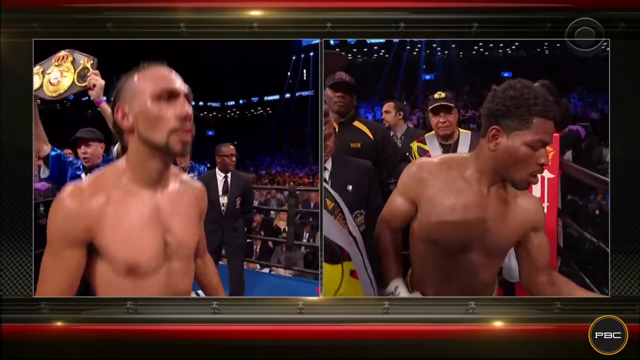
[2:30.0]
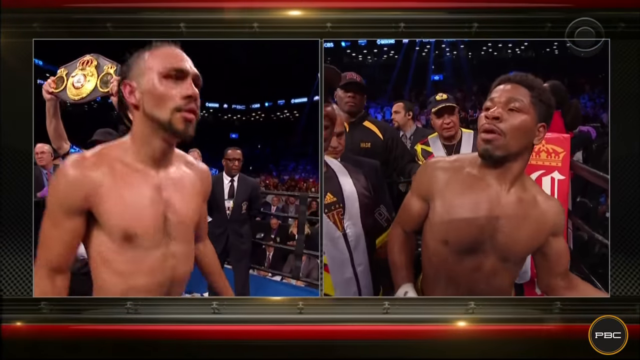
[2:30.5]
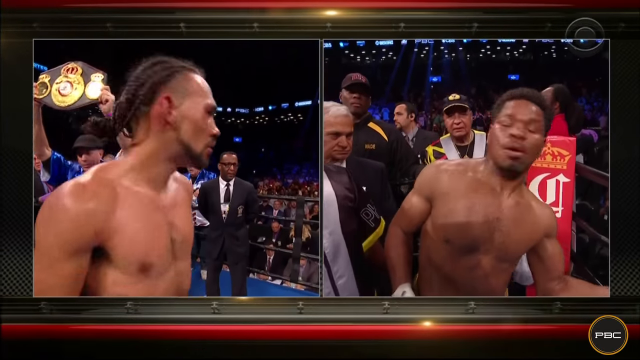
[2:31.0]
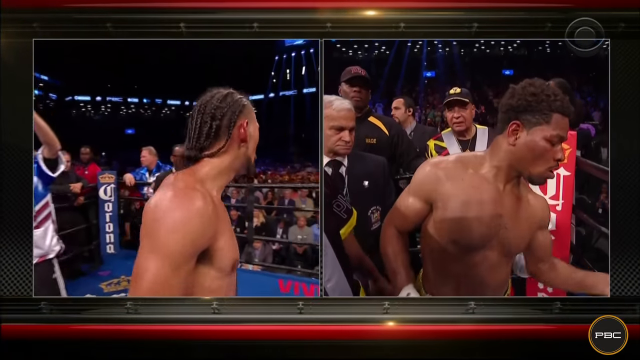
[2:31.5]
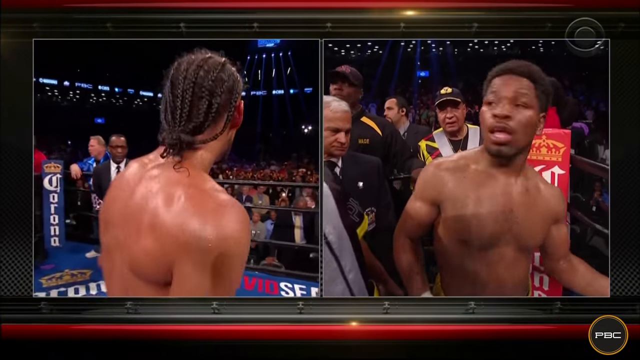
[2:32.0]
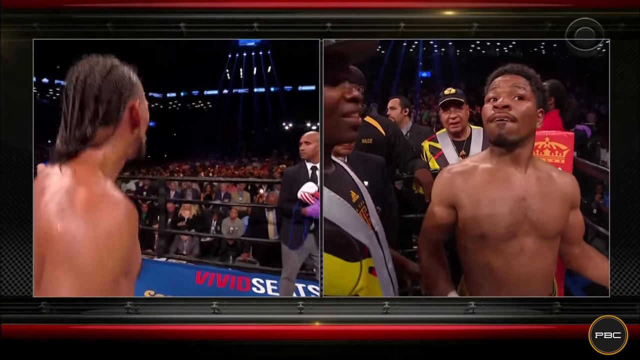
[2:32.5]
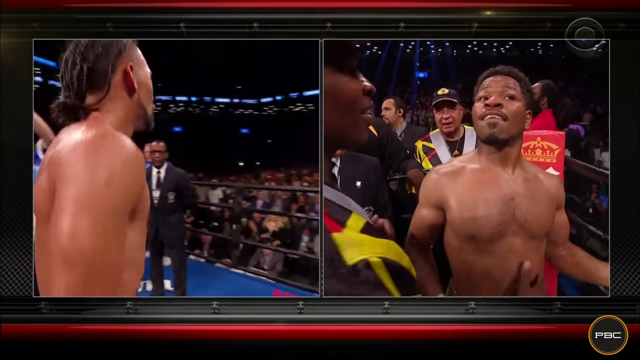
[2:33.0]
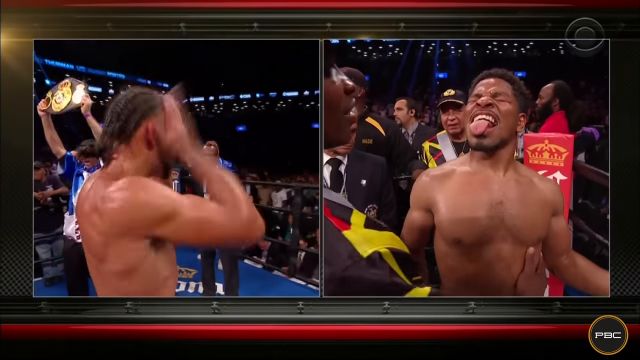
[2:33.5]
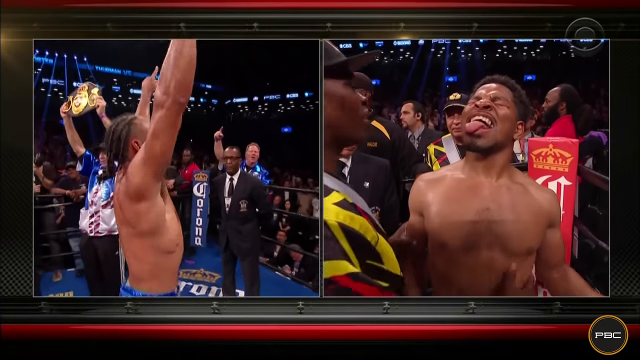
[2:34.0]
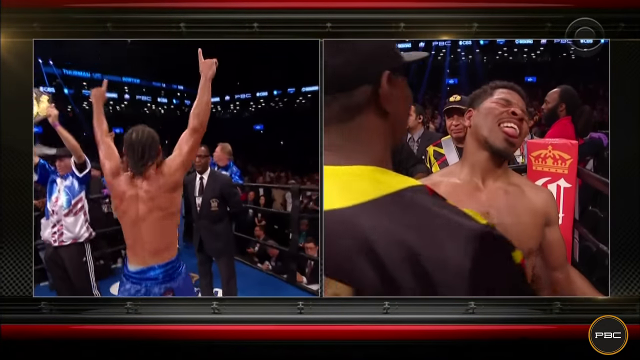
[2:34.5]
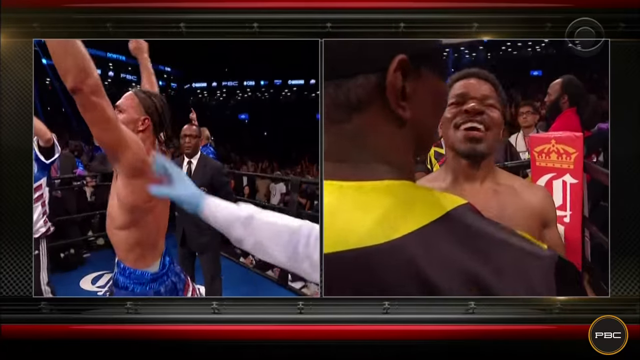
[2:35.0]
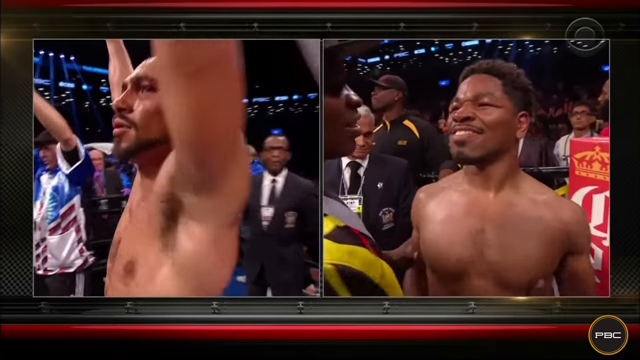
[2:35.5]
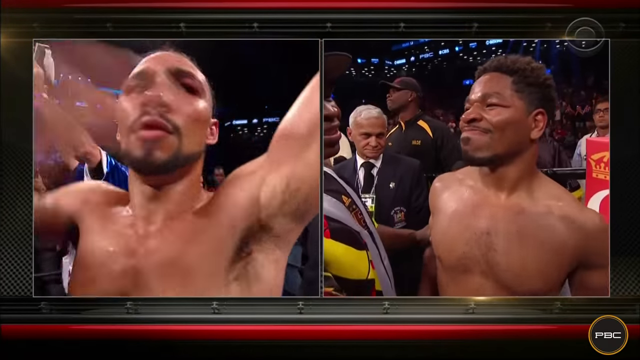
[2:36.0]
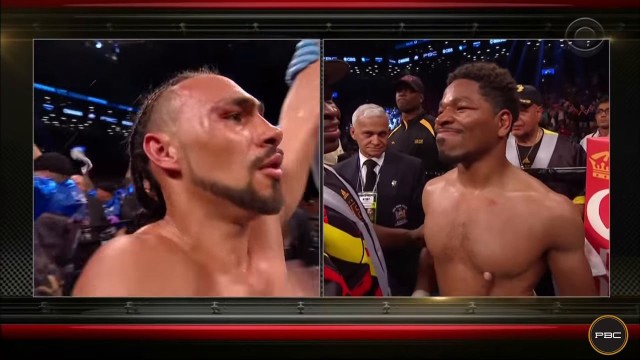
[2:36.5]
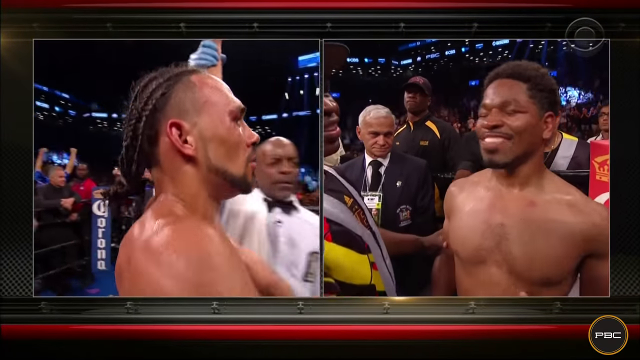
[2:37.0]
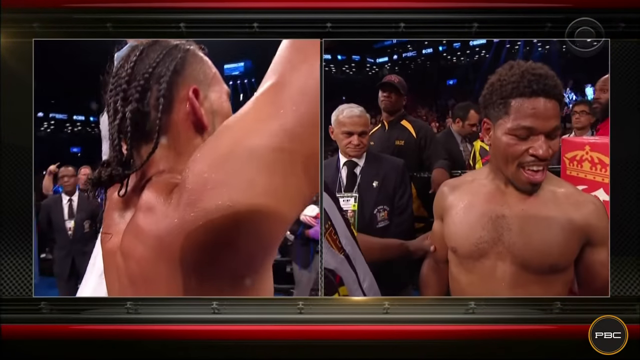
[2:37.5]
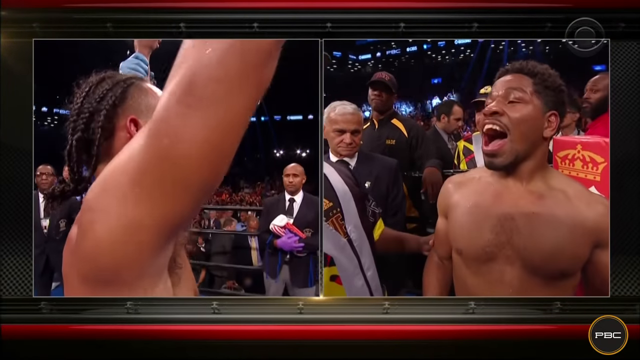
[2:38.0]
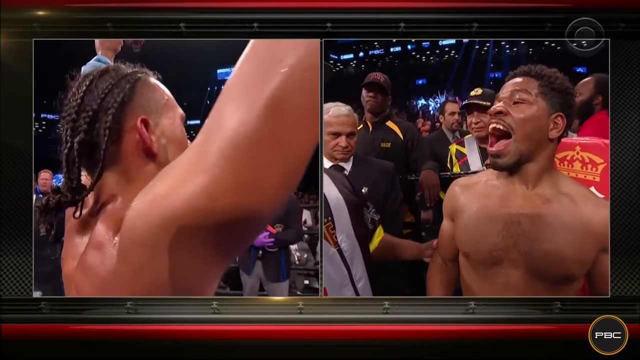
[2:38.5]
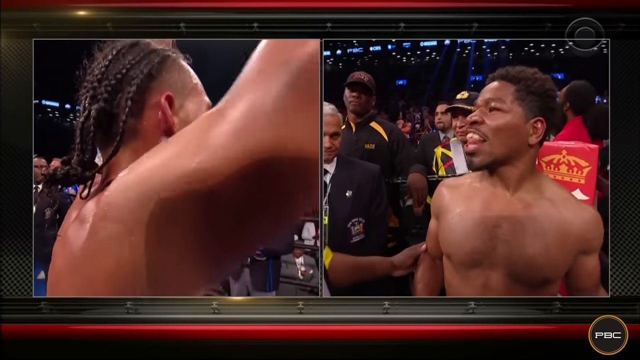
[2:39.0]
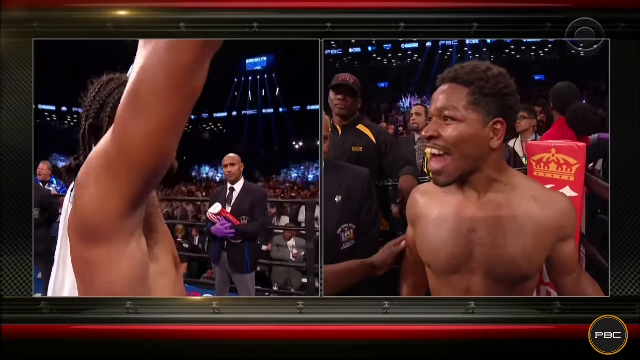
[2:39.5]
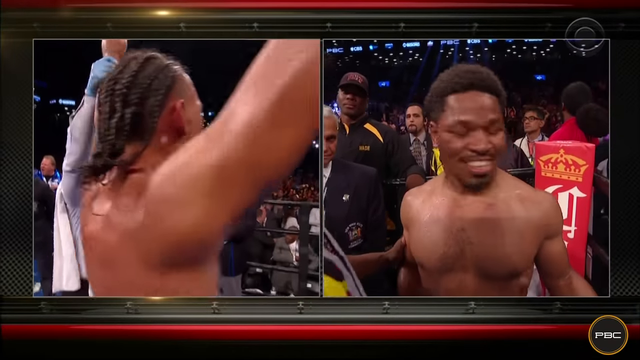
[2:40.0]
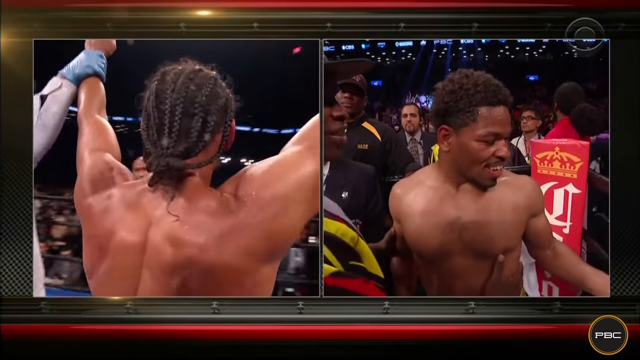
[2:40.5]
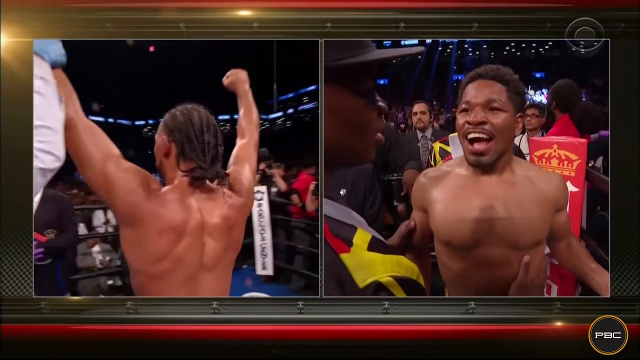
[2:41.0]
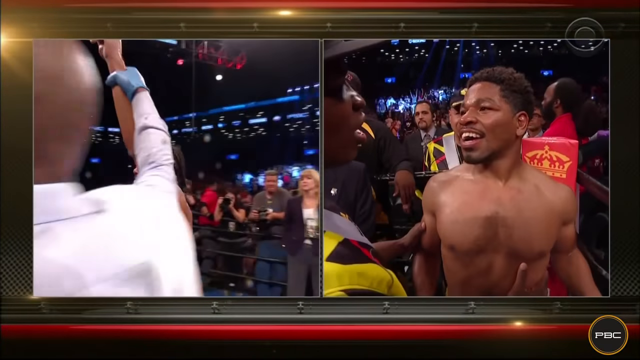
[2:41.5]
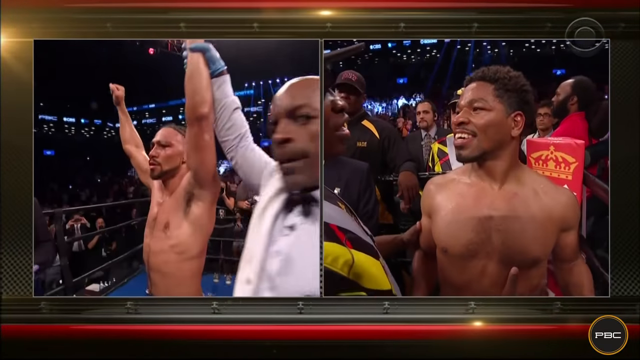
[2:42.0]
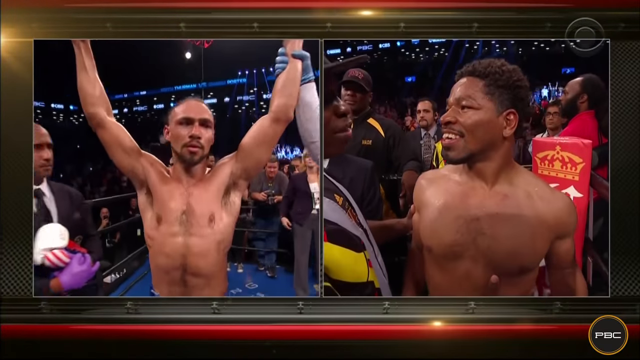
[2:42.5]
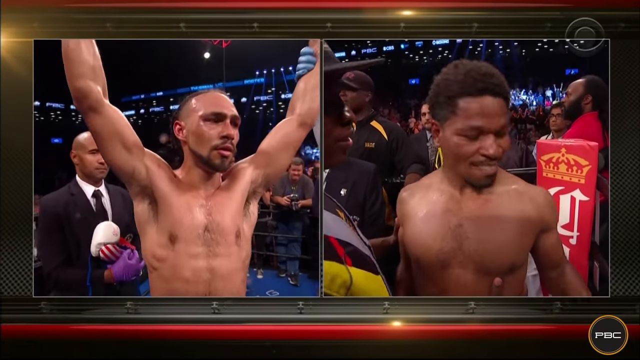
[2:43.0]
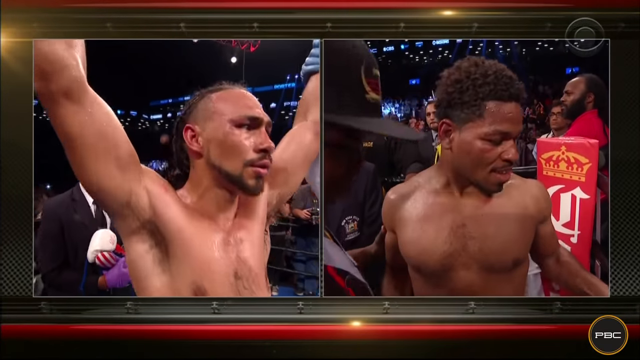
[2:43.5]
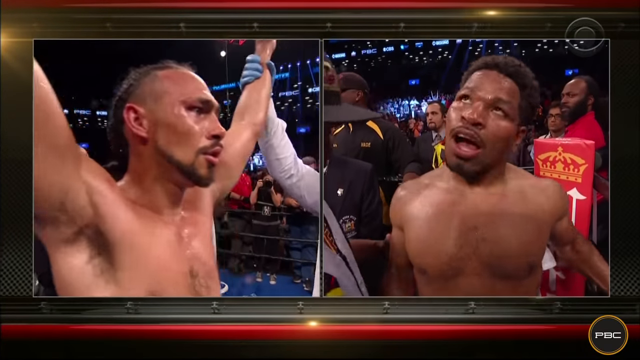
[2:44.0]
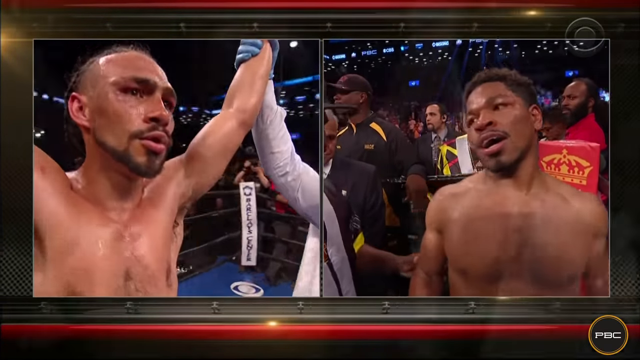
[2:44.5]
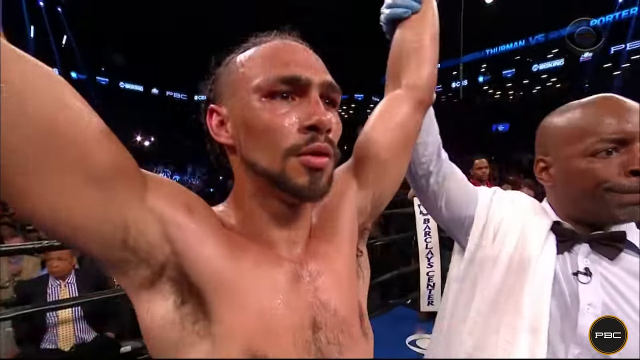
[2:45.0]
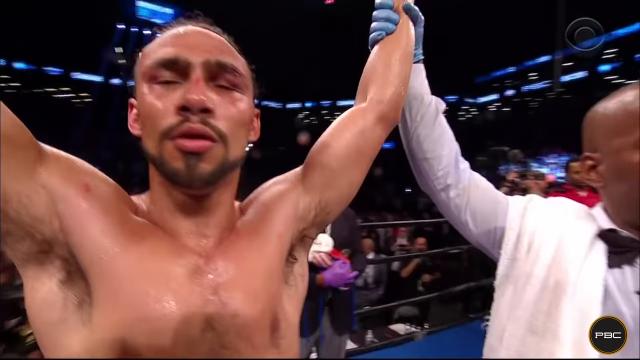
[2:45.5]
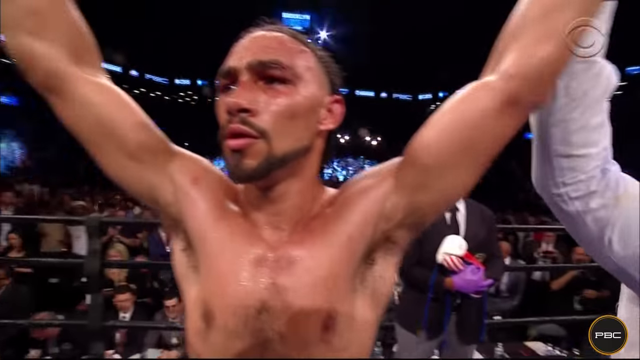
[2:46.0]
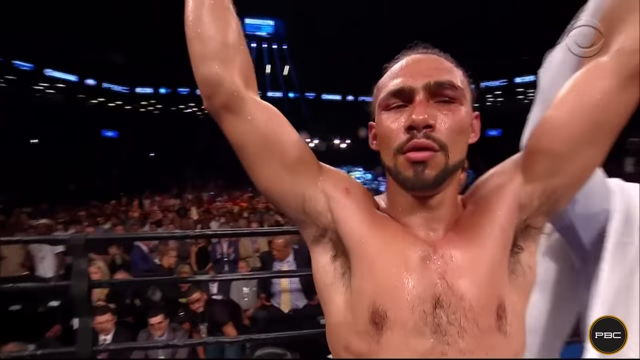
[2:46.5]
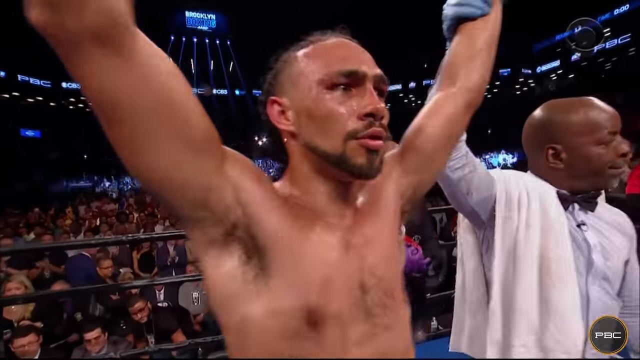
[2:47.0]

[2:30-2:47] The two fighters are still shown side by side in separate videos. The fighter on the left jumps up and down, looks out to the crowd, and lifts his hands into the air with one finger raised on each hand; it appears he has just won the fight. Meanwhile the fighter on the right grimaces with a negative facial expression, appearing to show he has lost. The fighter in blue on the left turns around and his face is seen in close-up, while the fighter on the right laughs and smiles as the left fighter's hand is raised. The fighter on the right, with the darker brown complexion, appears amused by the result or shocked by losing, and seems to be looking up at the jumbotron or screen above him showing the fighter in blue shorts with his hands held up. The fighter in blue shorts on the left has a stoic expression, both arms above his head, one of them held up by the referee in the long-sleeved white shirt.